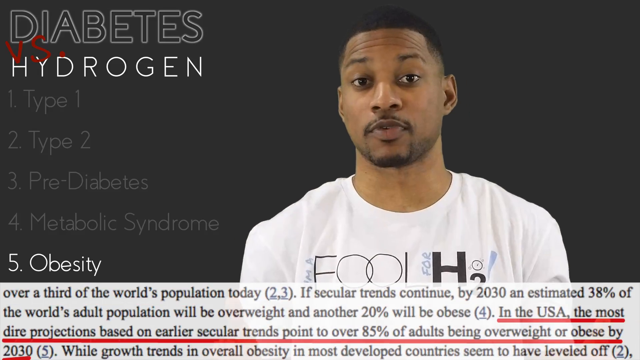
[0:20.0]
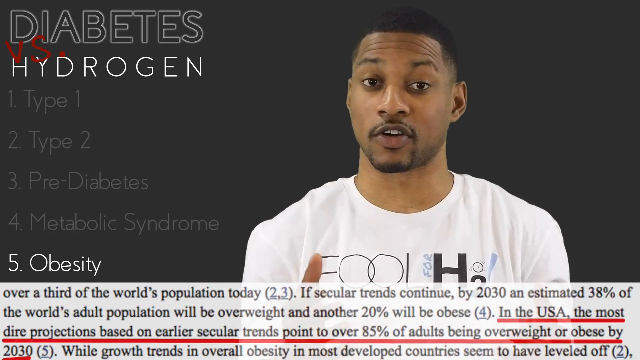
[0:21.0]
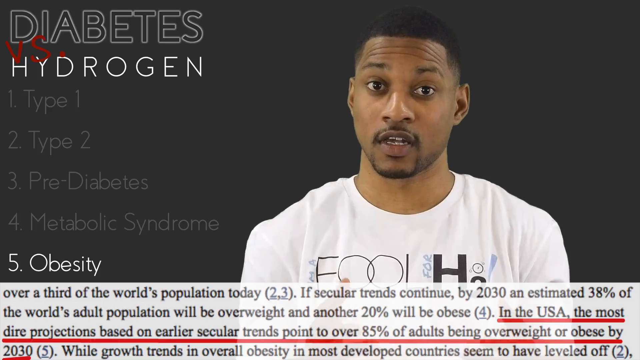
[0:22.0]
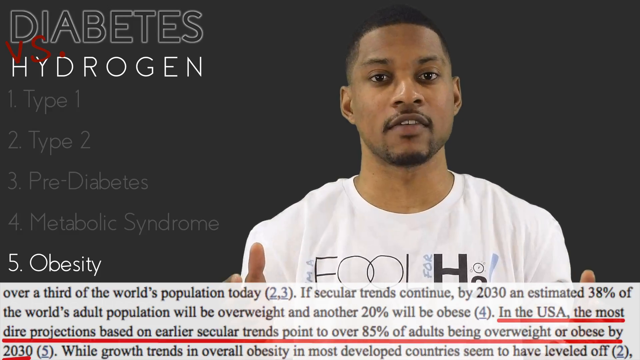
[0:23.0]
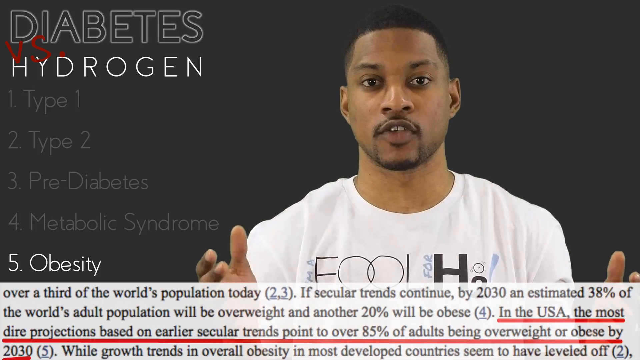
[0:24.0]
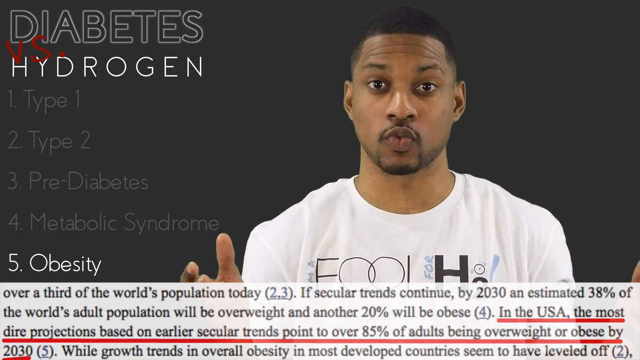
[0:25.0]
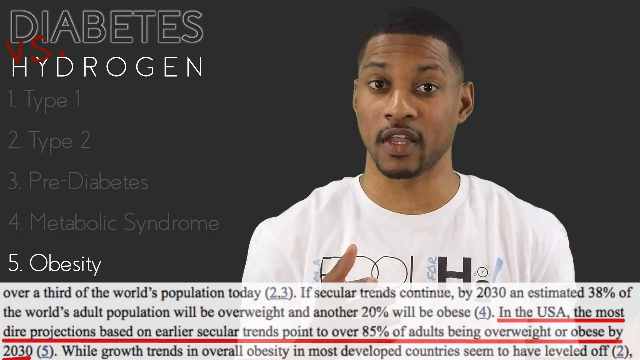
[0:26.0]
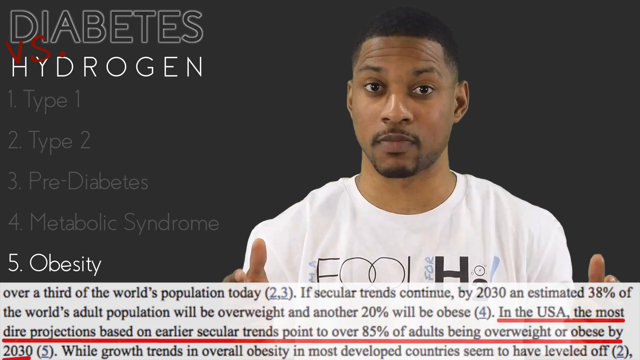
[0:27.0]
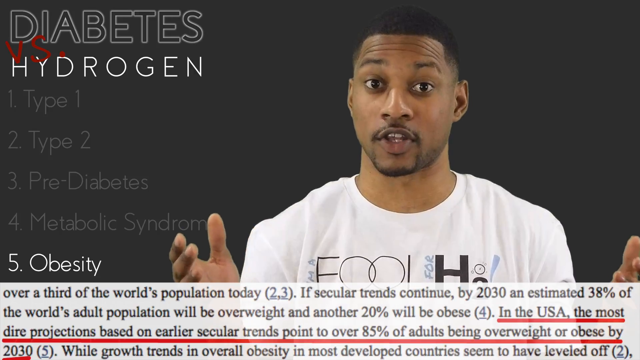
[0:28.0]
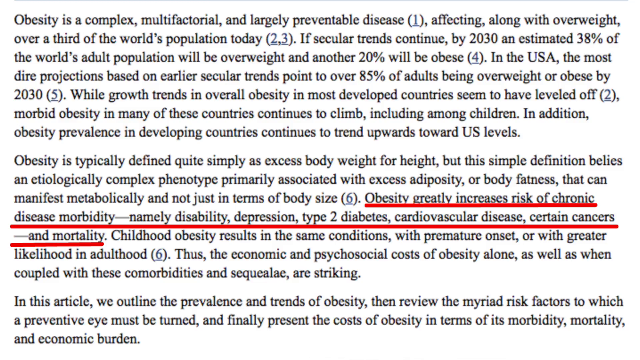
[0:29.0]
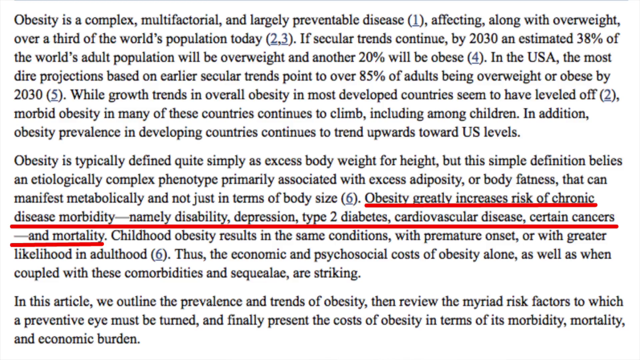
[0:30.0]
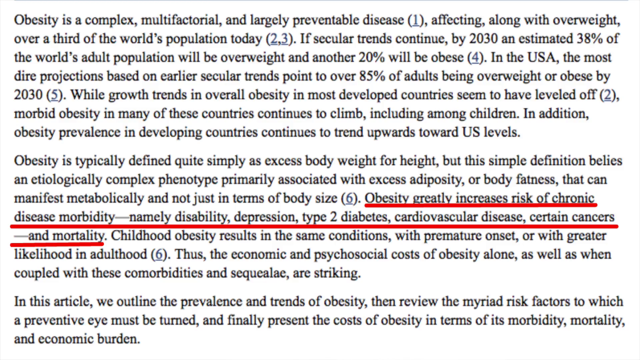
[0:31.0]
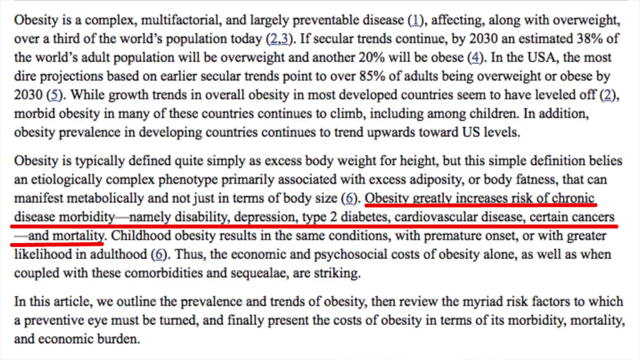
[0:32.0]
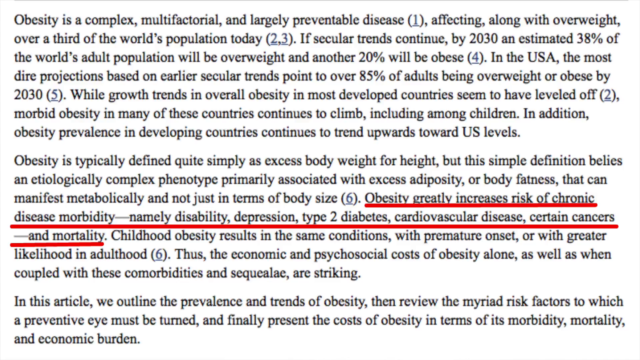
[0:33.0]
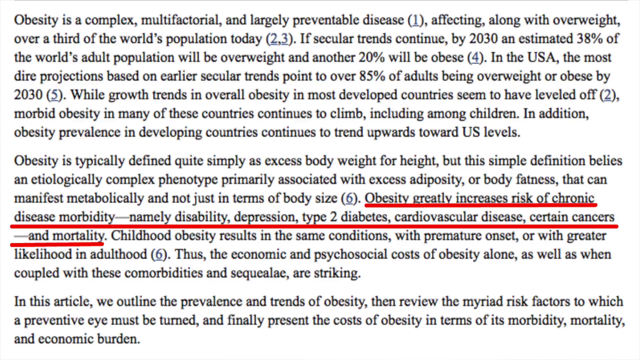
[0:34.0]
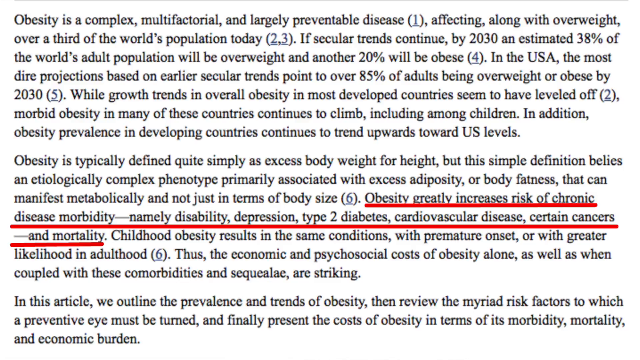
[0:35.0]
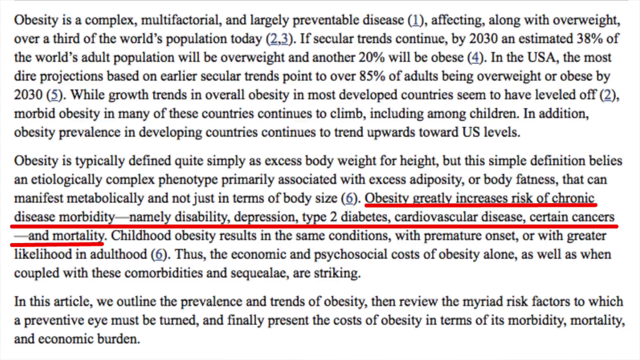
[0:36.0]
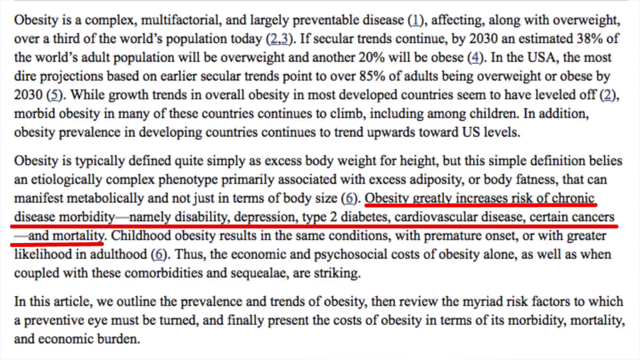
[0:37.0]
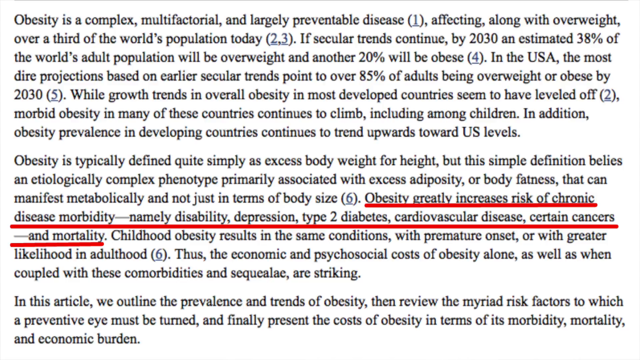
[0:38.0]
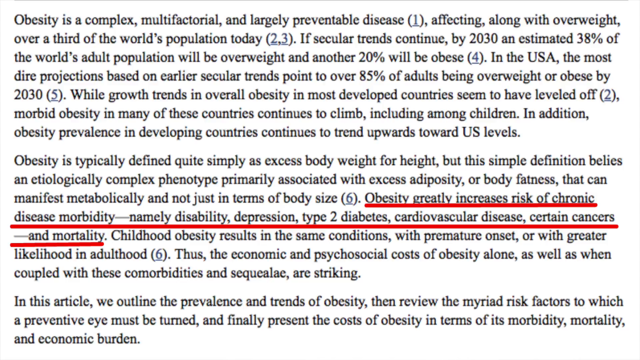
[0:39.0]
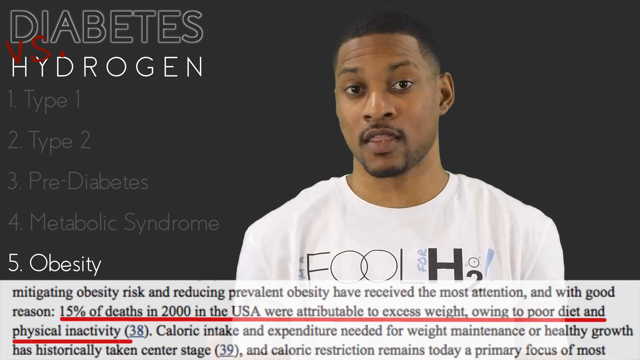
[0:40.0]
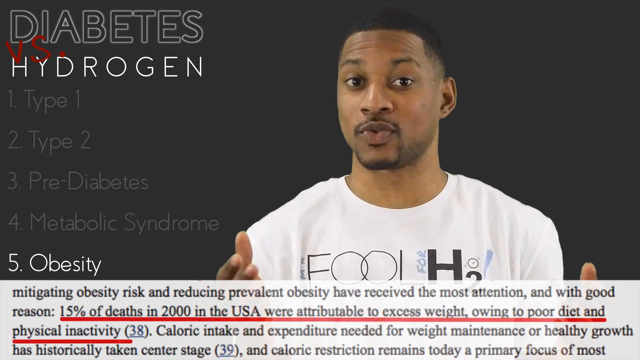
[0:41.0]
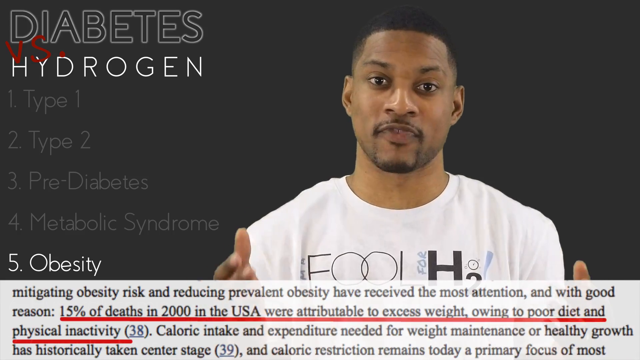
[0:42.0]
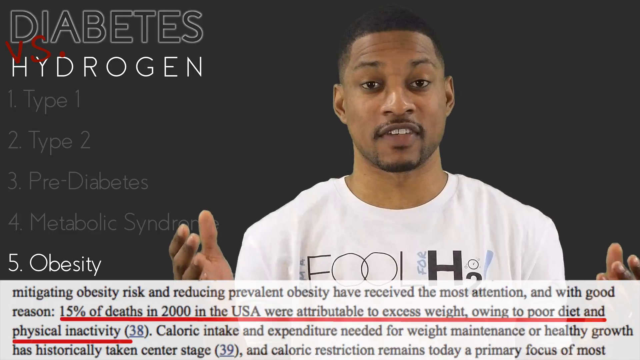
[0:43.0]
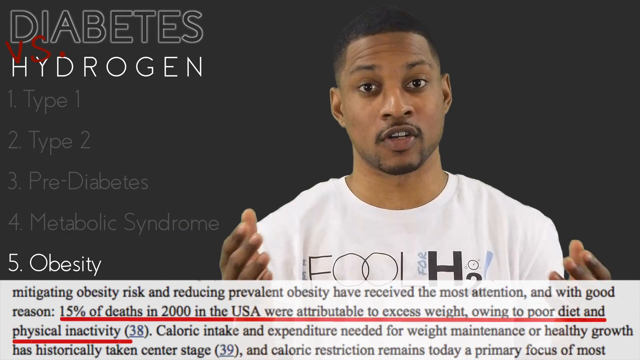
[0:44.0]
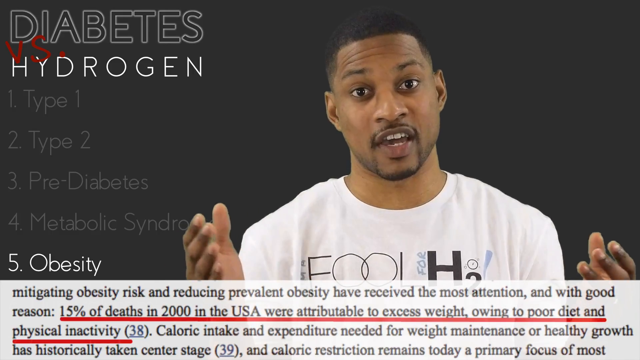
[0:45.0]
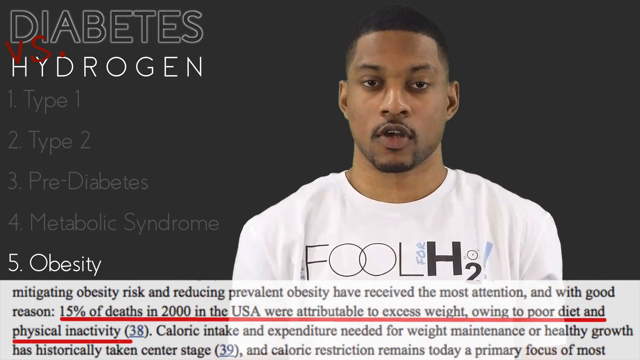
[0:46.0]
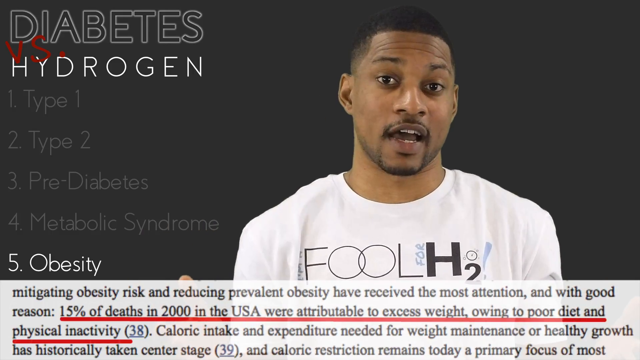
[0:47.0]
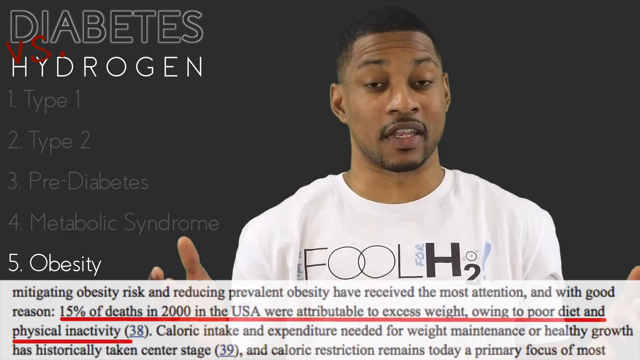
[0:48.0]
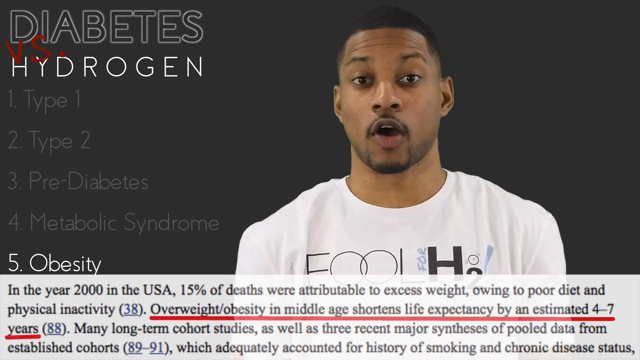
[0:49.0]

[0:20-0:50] A person appears as the video continues on diabetes, type 1 and type 2, prediabetes, the metabolic system and obesity. The material states that obesity is a complex, multifactorial and largely preventable disease affecting over a third of the world's population today. It notes that in many developed countries morbid obesity continues to climb, including among children, and that obesity prevalence in developing countries continues to trend upward toward U.S. levels.